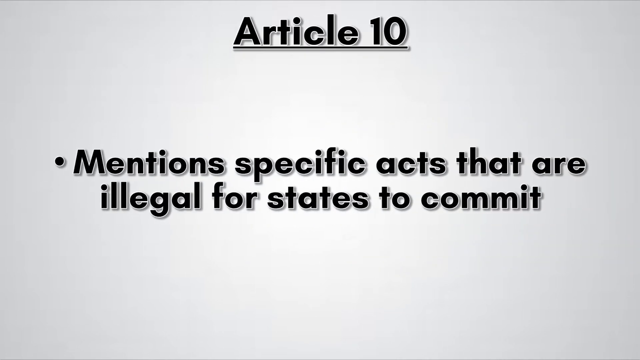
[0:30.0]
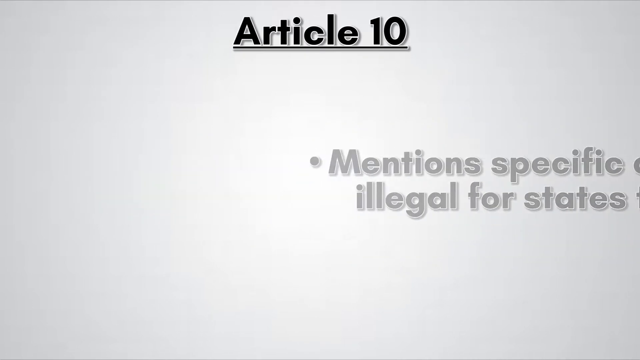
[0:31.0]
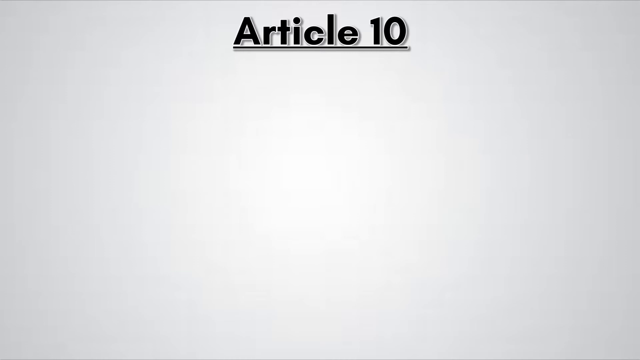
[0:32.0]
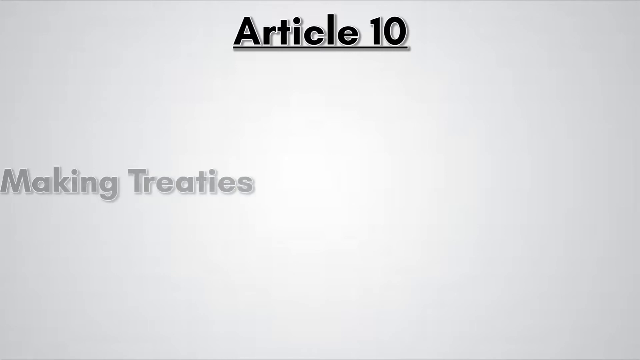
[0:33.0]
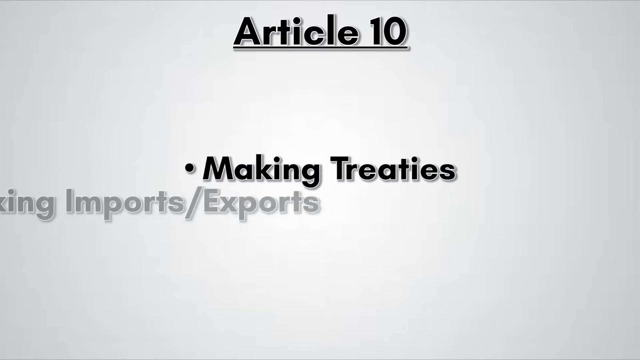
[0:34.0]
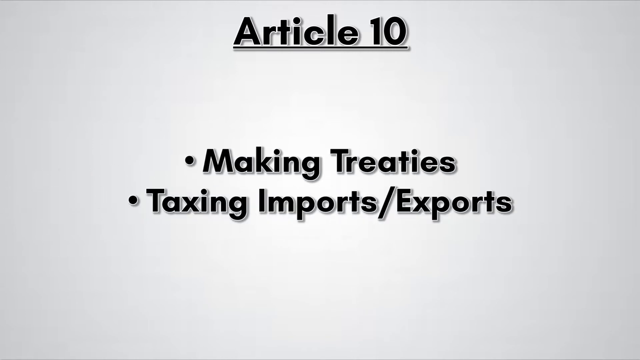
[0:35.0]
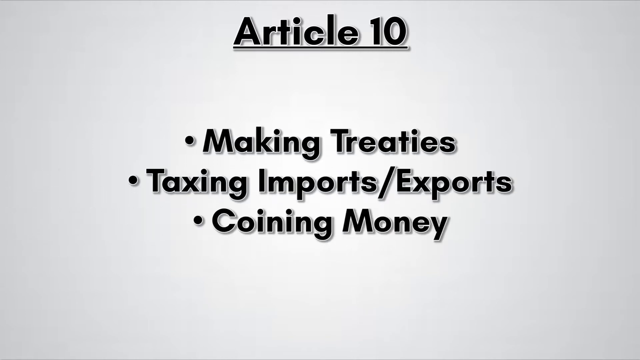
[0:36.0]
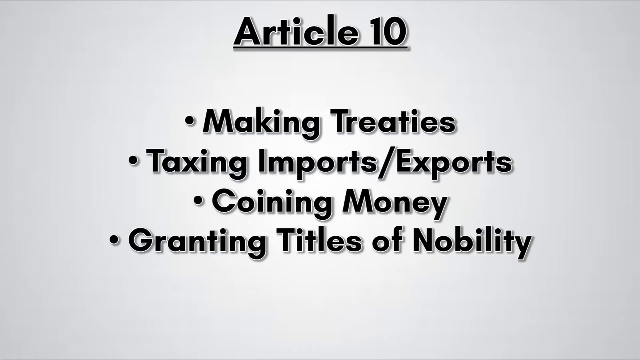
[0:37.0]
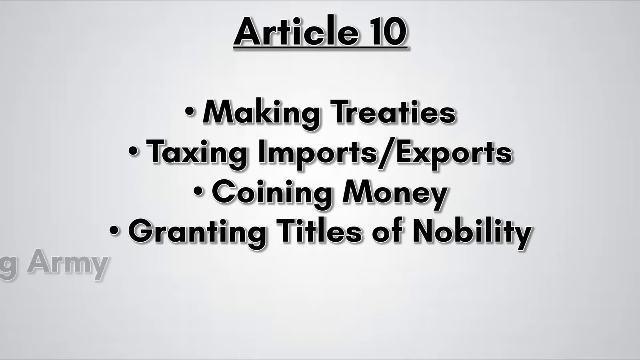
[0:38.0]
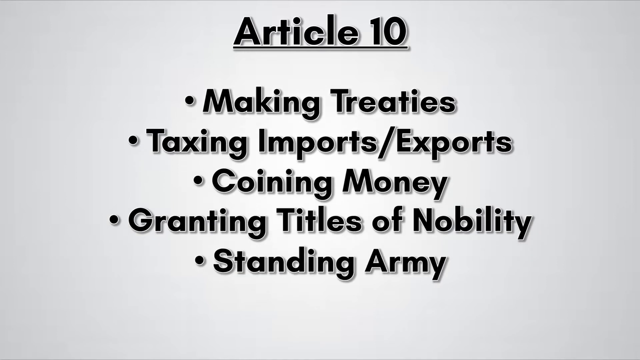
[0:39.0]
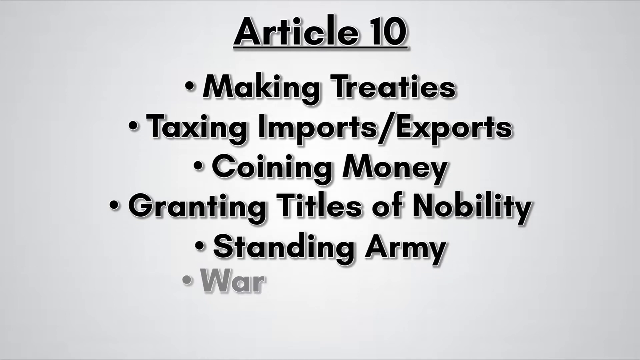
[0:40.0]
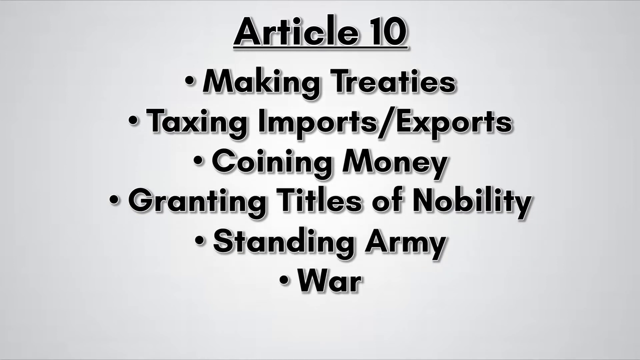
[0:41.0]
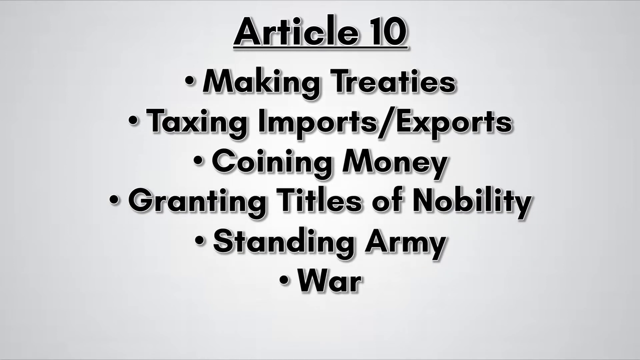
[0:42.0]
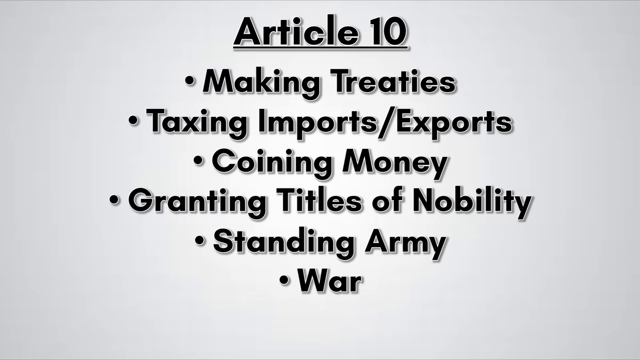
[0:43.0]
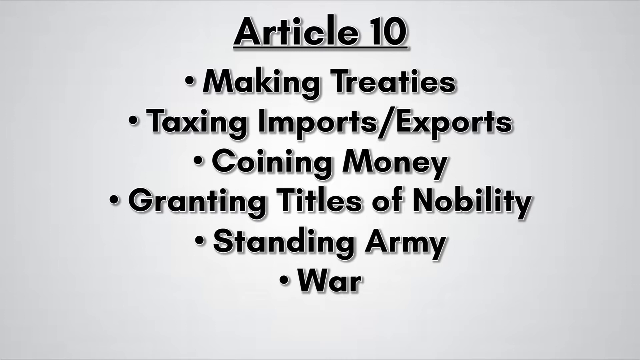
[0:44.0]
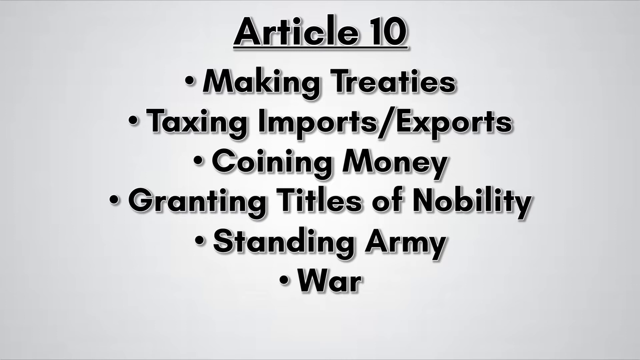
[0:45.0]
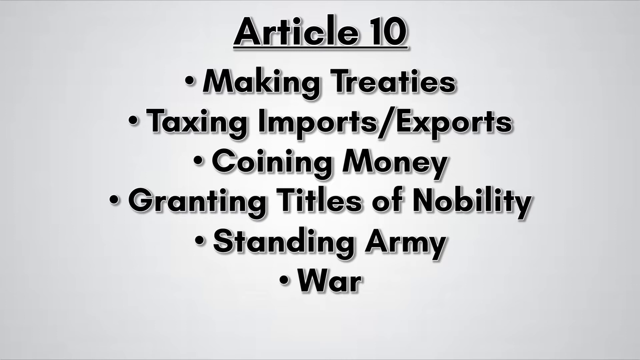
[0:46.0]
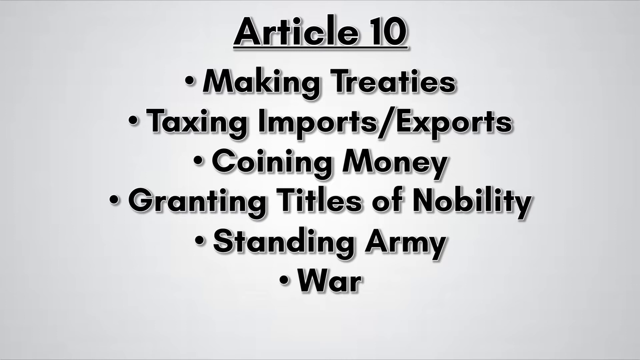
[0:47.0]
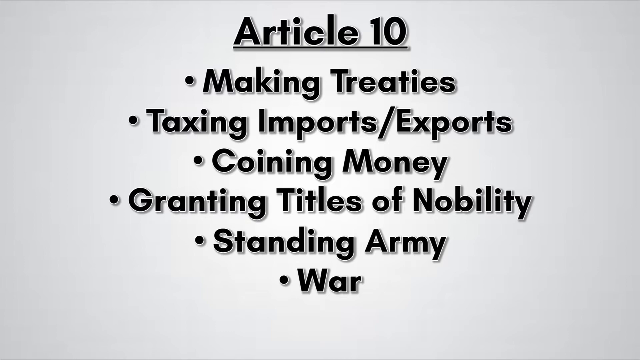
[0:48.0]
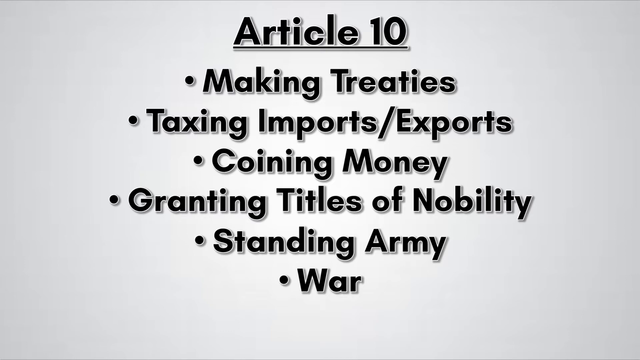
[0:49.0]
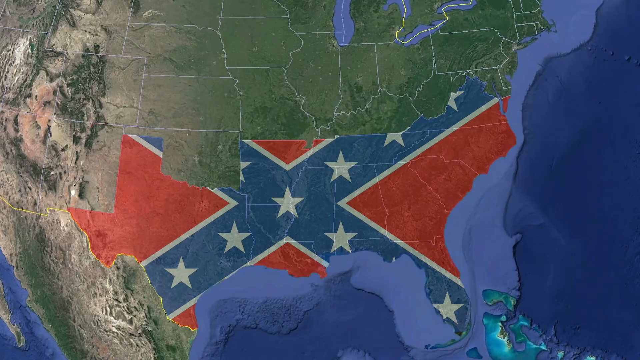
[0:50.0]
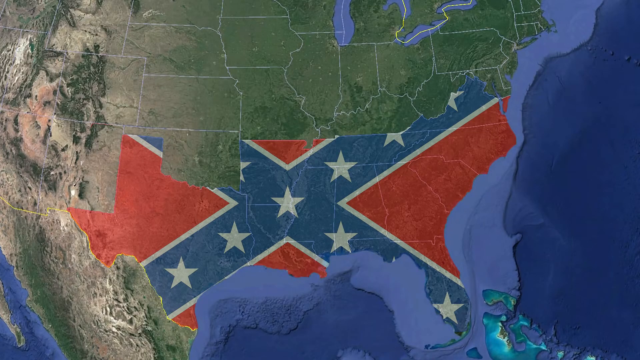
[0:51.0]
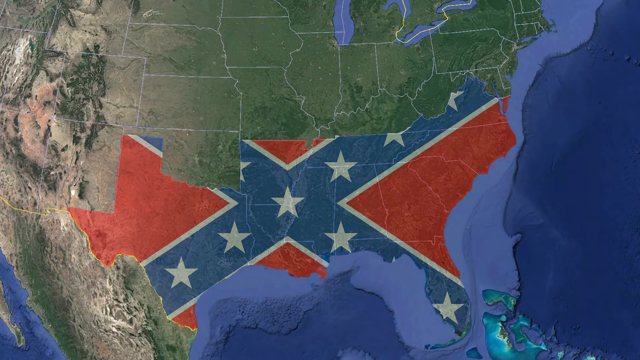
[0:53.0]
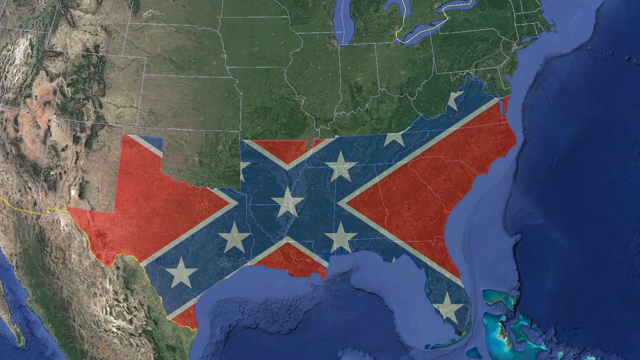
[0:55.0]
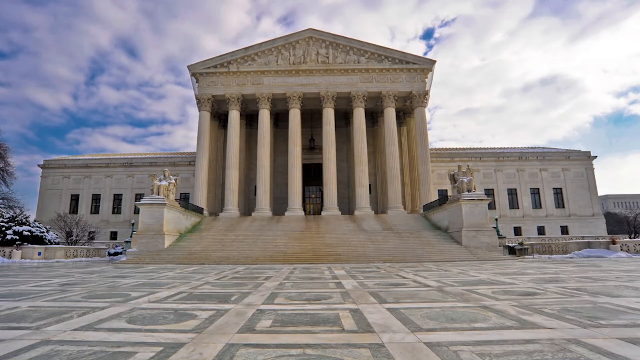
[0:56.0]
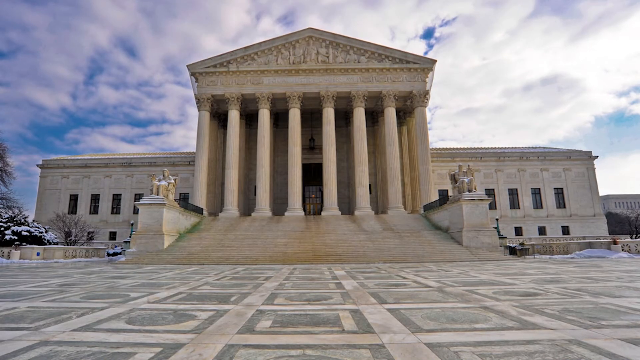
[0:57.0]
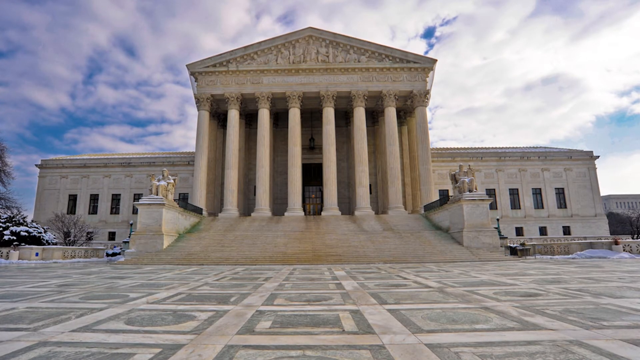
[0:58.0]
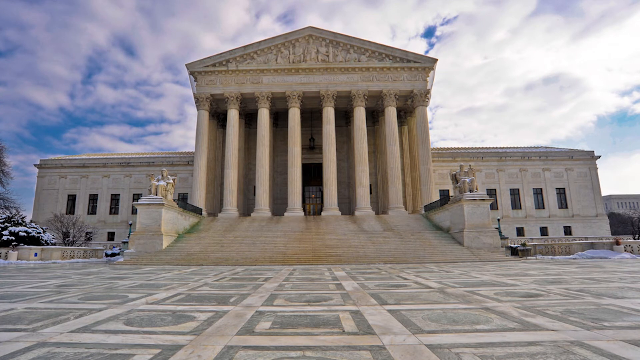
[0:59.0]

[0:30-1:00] A white background shows "Article 10" and the following titles written in black: "making treaties," "taxing imports and exports," "coining money," "granting titles of nobility," "standing army" and "war." The view then switches back to a map of the United States of America. Where previously only Texas was colored in, the whole southern and eastern portion of the east coast and the Gulf of Mexico area is now covered with a Confederate flag emblem. This includes Texas, Louisiana, Florida, Georgia, Mississippi, Alabama, Tennessee, South Carolina, North Carolina and Virginia, and apparently Arkansas as well. A constitutional building then appears, possibly in Philadelphia, PA or Washington, DC.